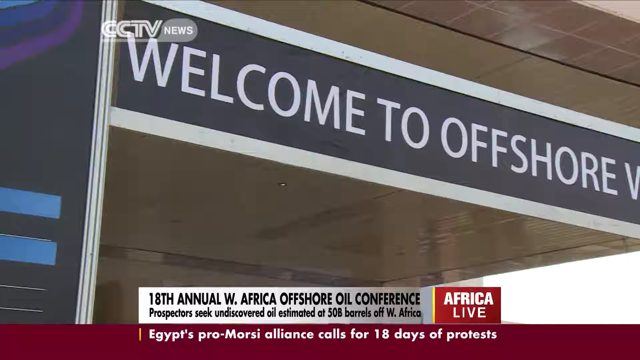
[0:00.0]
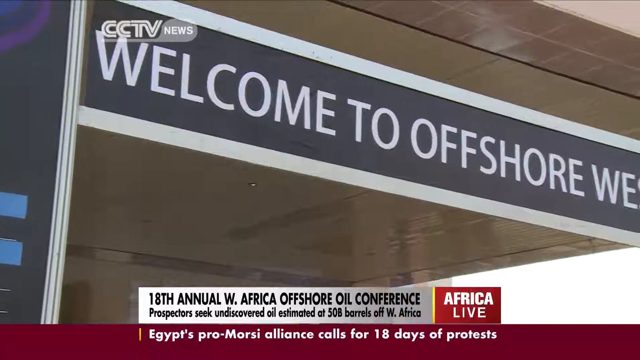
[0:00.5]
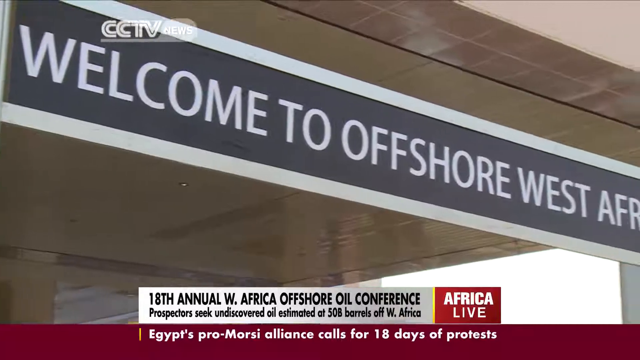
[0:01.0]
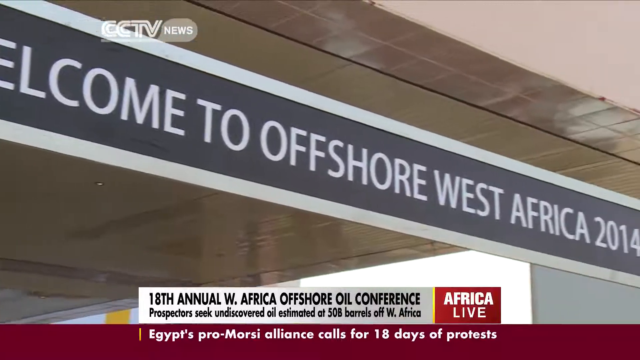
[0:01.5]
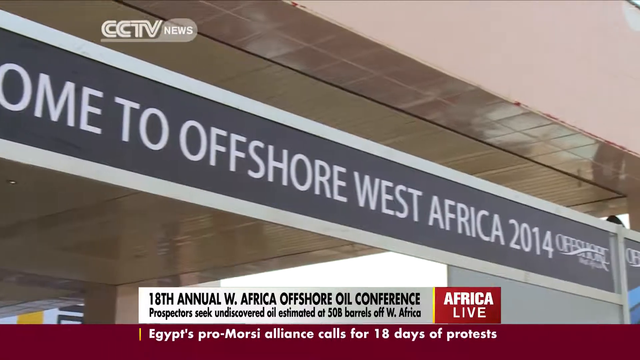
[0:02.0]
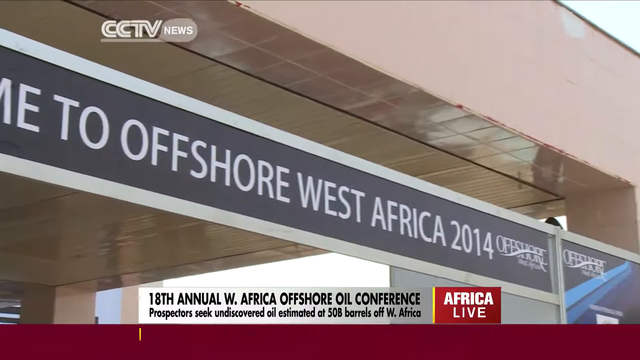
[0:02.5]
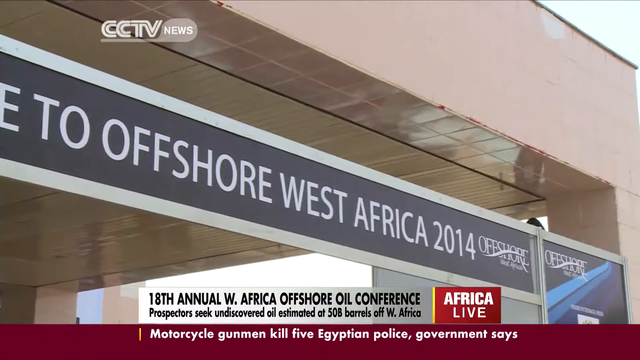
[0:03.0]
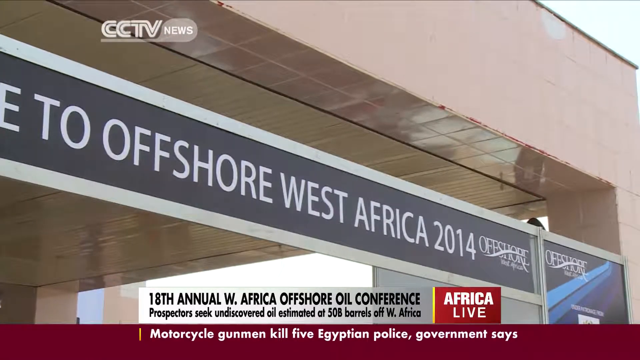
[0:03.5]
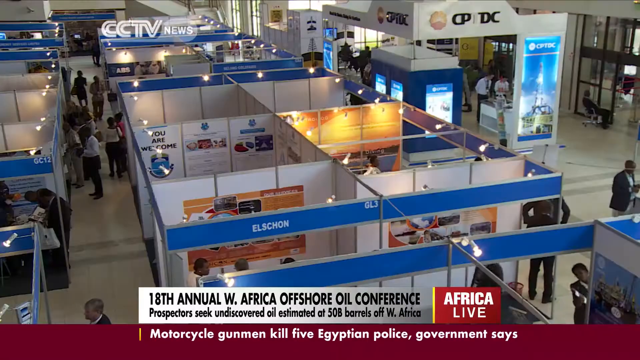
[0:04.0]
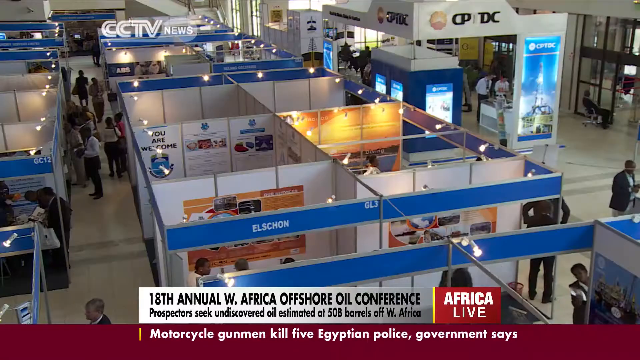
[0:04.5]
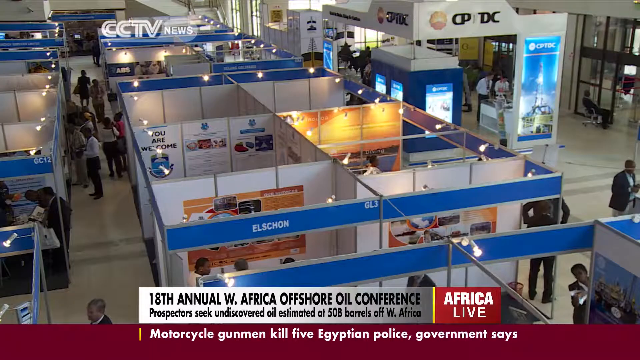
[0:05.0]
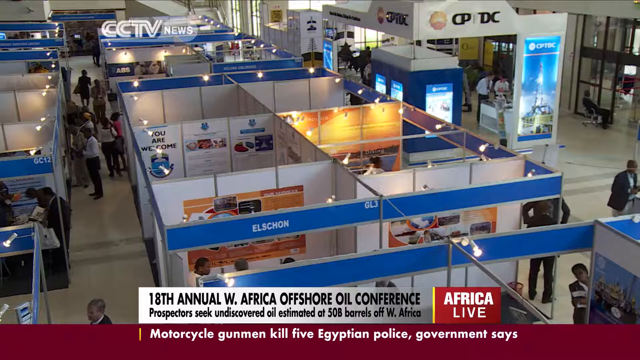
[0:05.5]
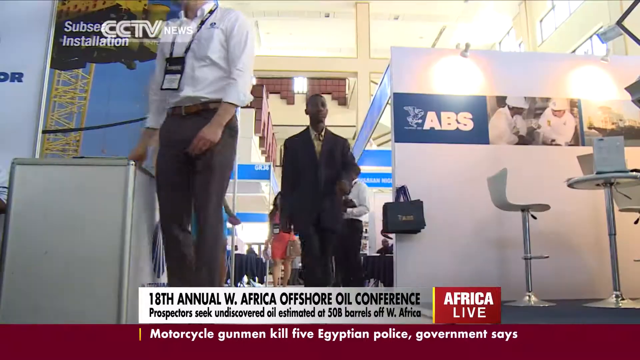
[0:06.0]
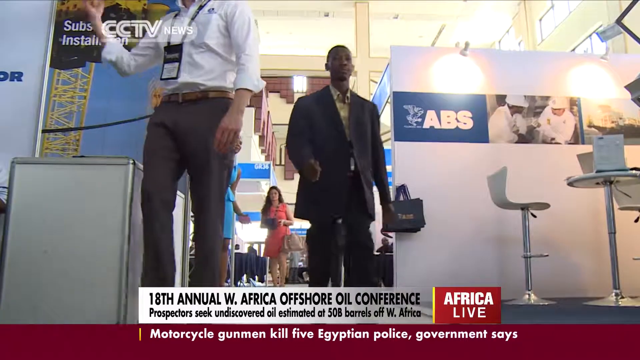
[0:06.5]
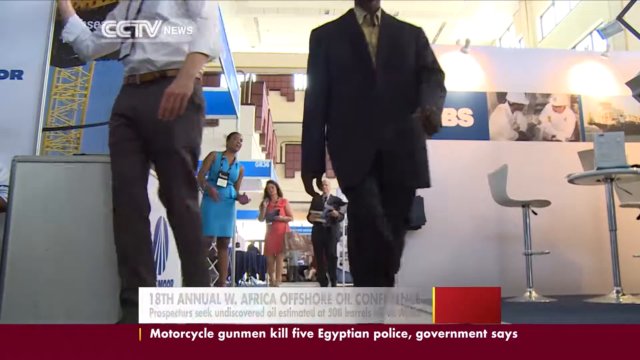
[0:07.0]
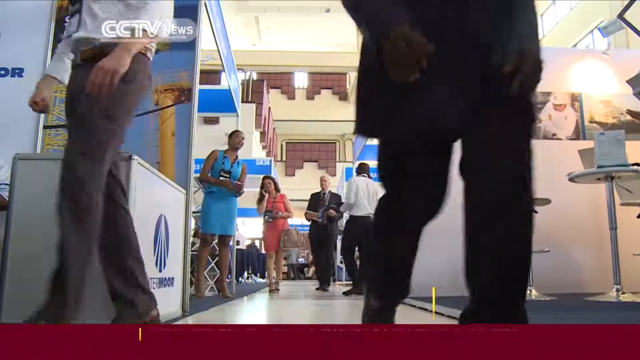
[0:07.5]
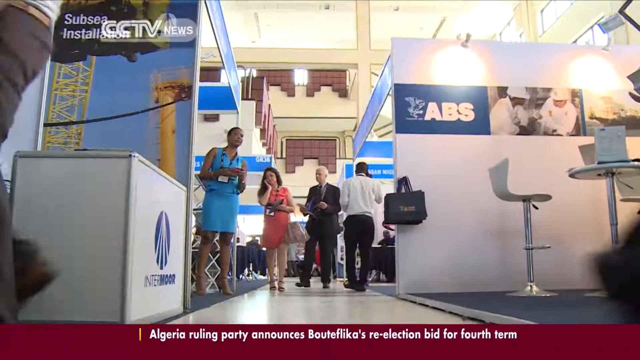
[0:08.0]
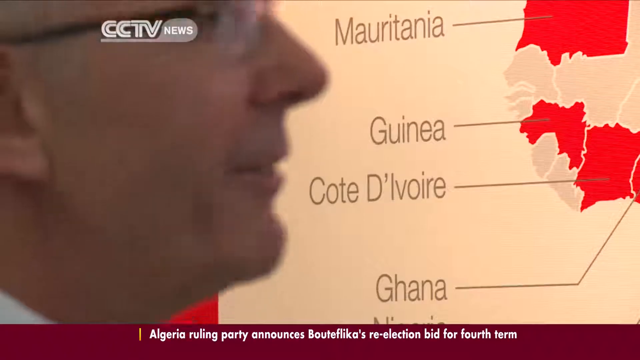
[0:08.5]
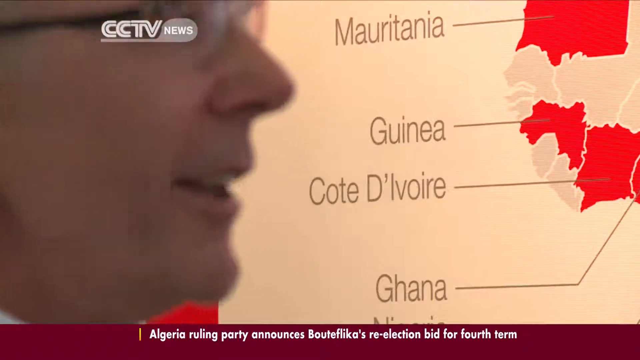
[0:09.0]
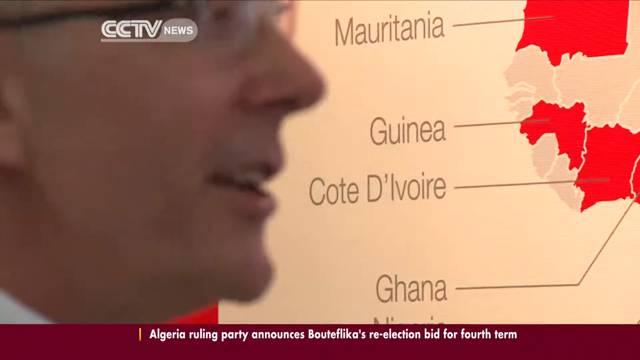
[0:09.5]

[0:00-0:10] A sign reading "Welcome to Offshore" appears, written in white with a grey background behind it. Text at the bottom reads "18th annual West Africa offshore," and people are talking. In the top left, "CCTV News" is shown as the broadcasting channel. A man talks to the camera; he appears to be a round, middle-aged white American. At the bottom there is a red sign that reads "Africa Live." People are working in their offices, which look a lot like cubicles because they are very small. No animals are visible.